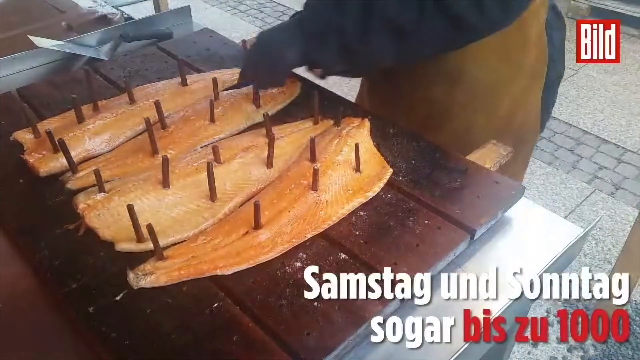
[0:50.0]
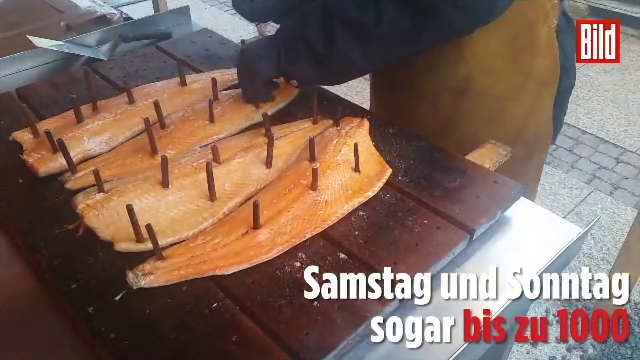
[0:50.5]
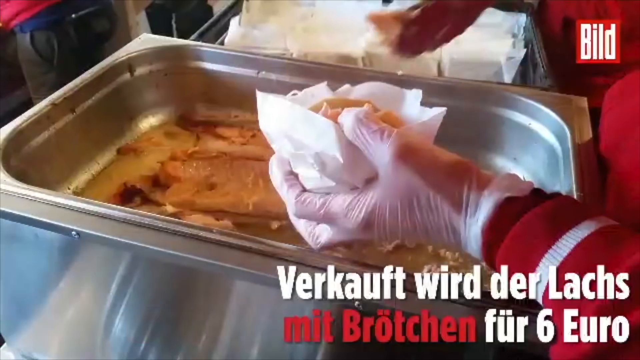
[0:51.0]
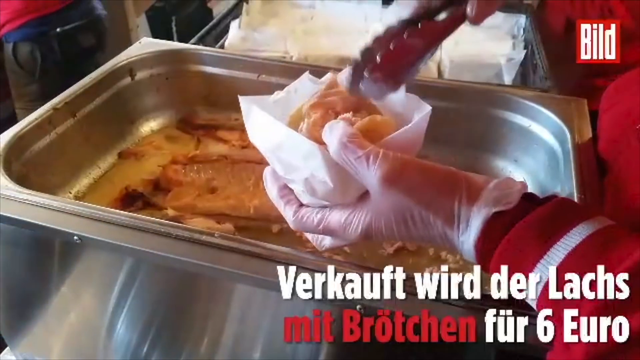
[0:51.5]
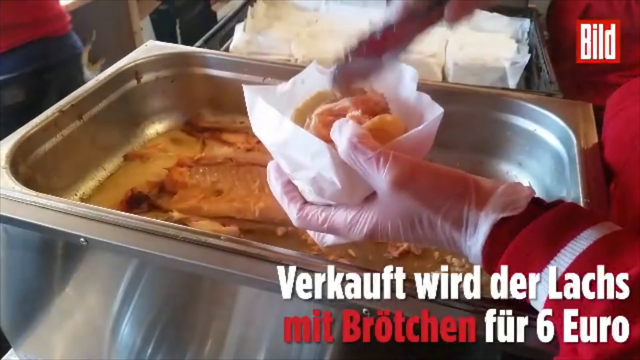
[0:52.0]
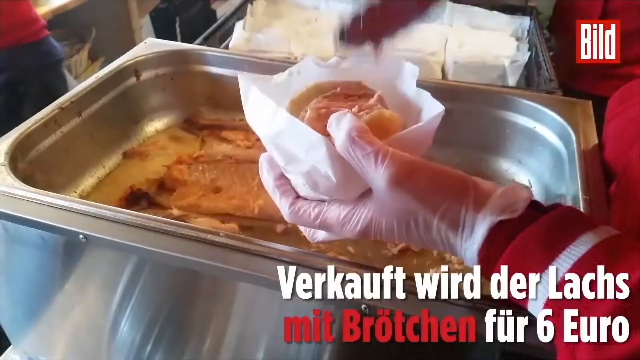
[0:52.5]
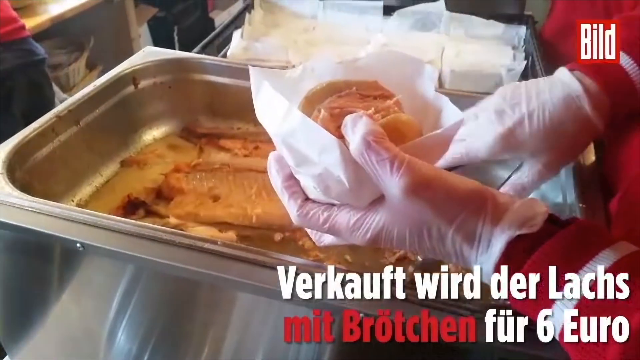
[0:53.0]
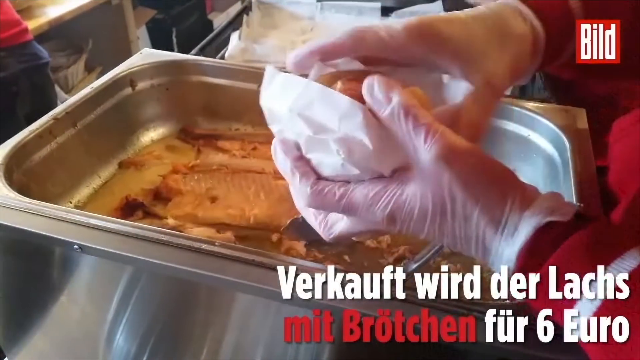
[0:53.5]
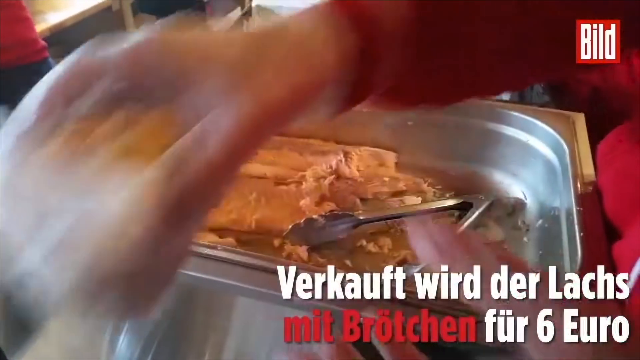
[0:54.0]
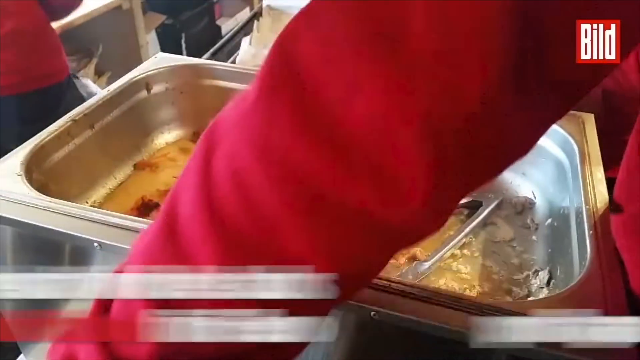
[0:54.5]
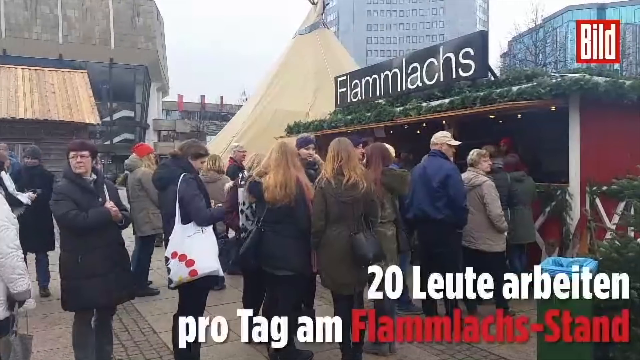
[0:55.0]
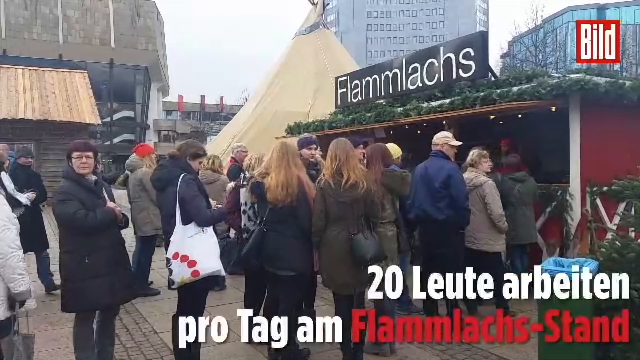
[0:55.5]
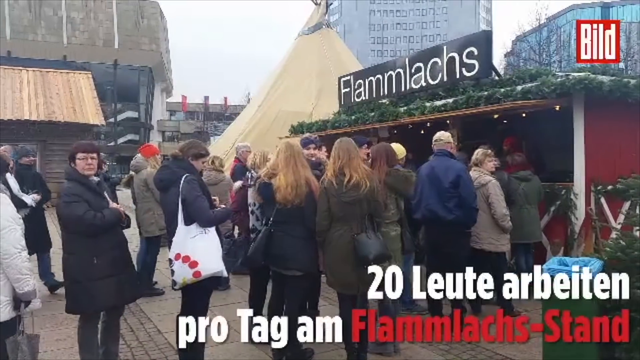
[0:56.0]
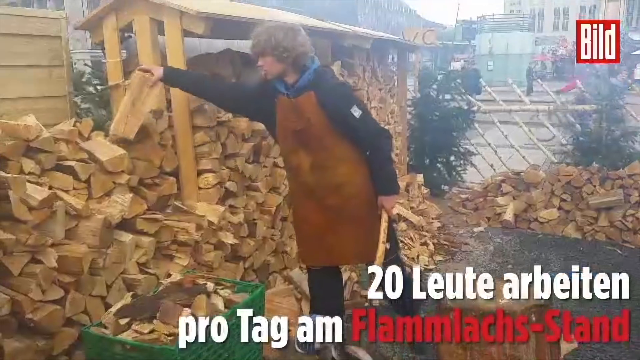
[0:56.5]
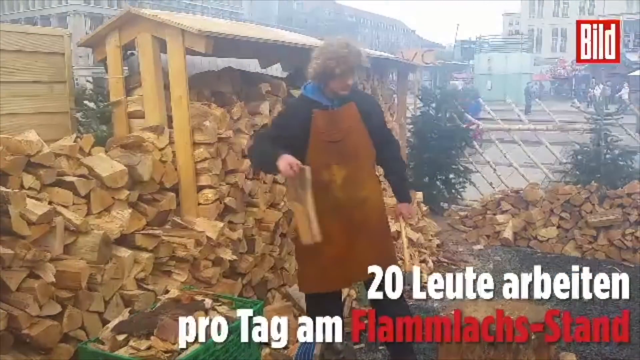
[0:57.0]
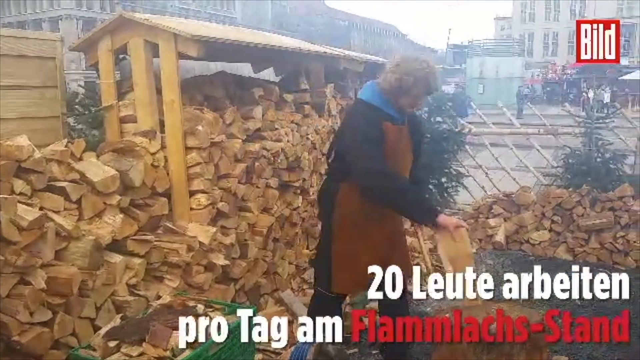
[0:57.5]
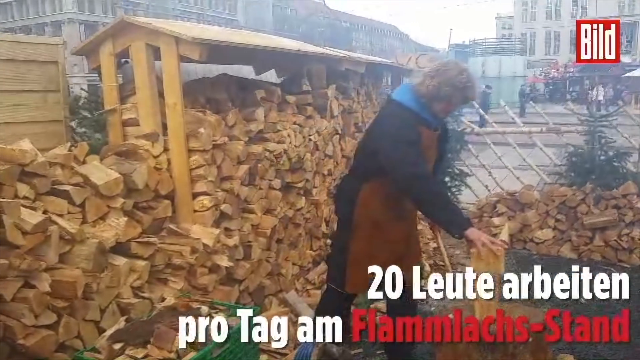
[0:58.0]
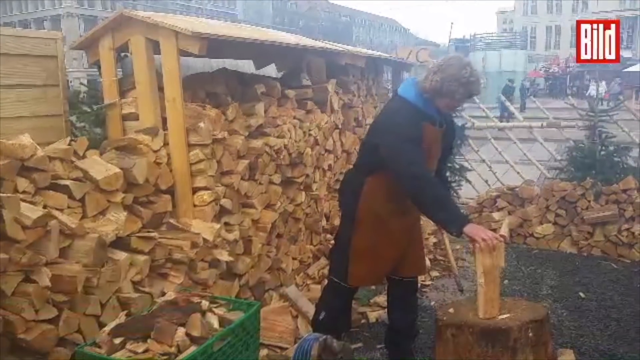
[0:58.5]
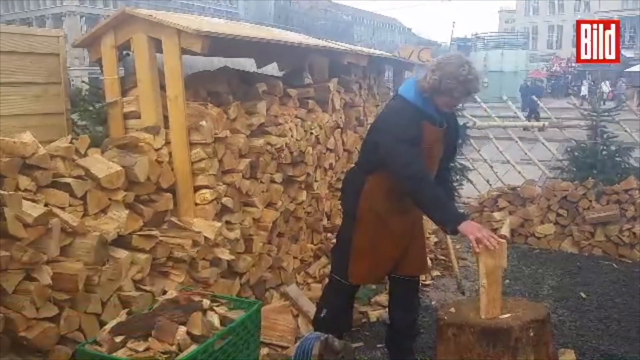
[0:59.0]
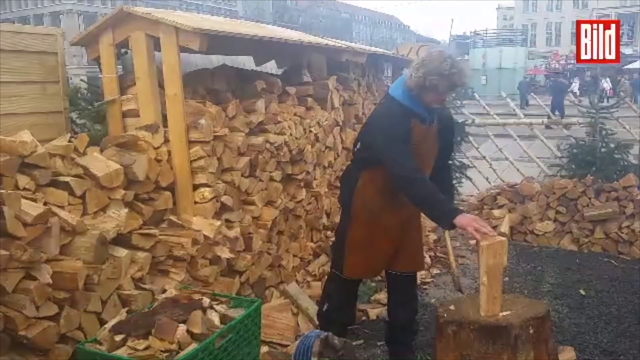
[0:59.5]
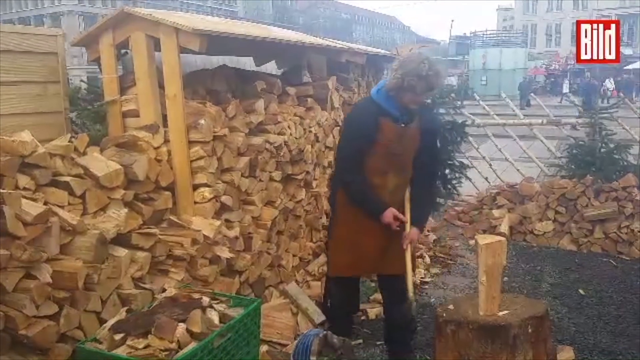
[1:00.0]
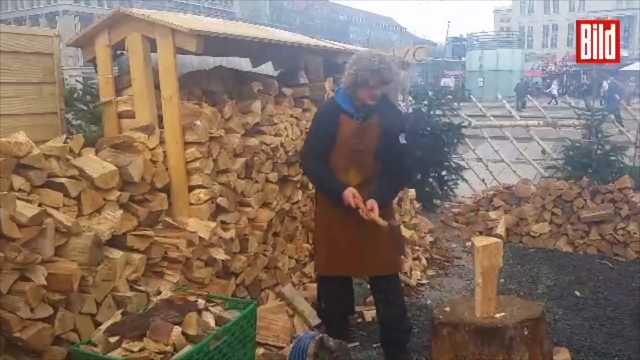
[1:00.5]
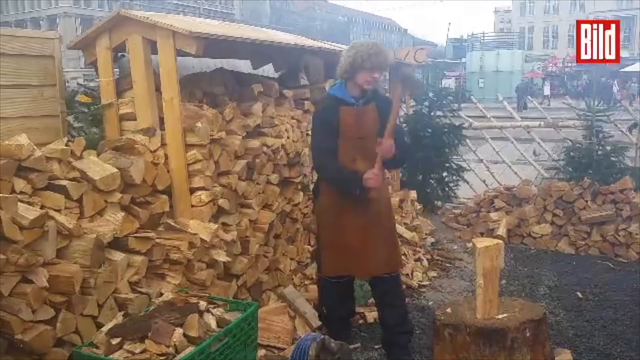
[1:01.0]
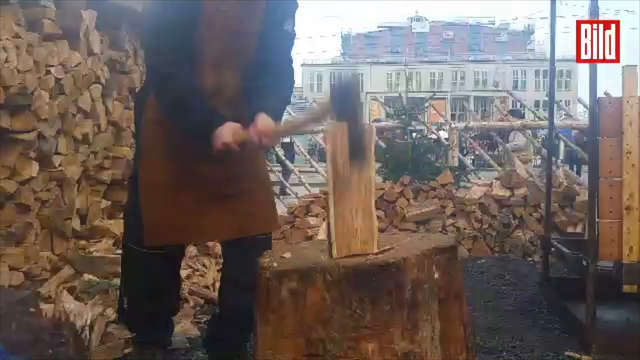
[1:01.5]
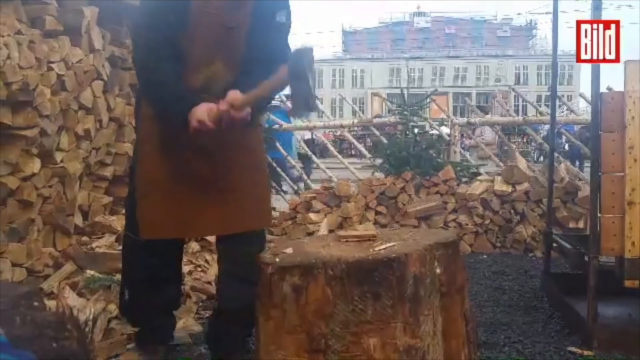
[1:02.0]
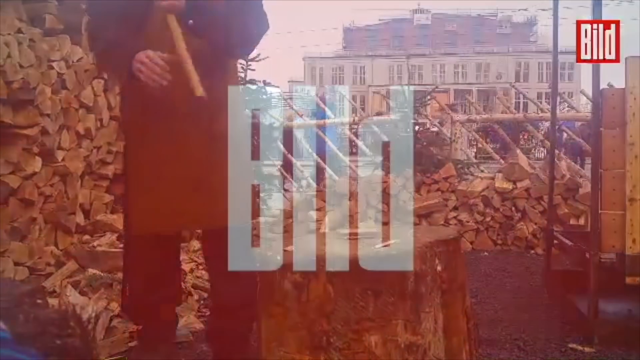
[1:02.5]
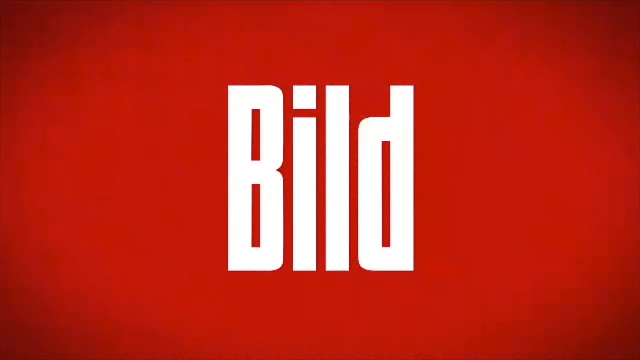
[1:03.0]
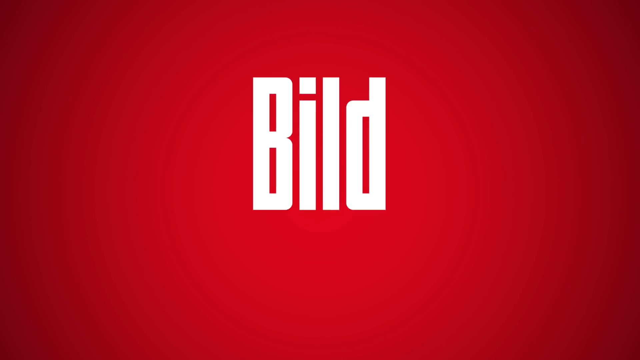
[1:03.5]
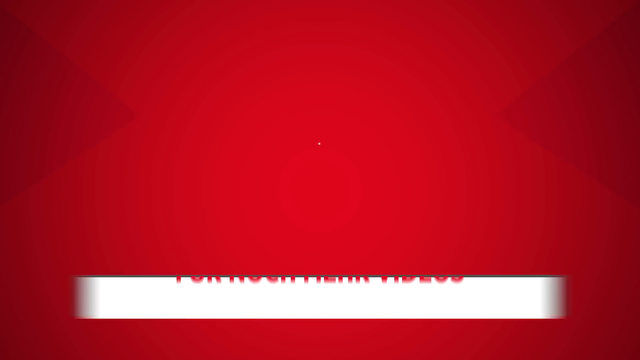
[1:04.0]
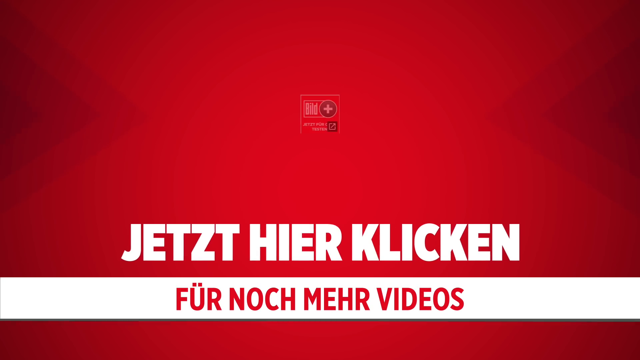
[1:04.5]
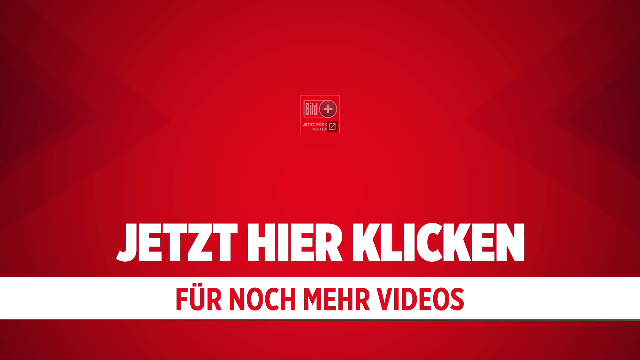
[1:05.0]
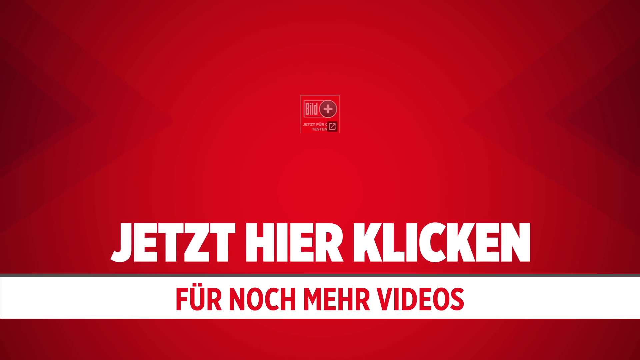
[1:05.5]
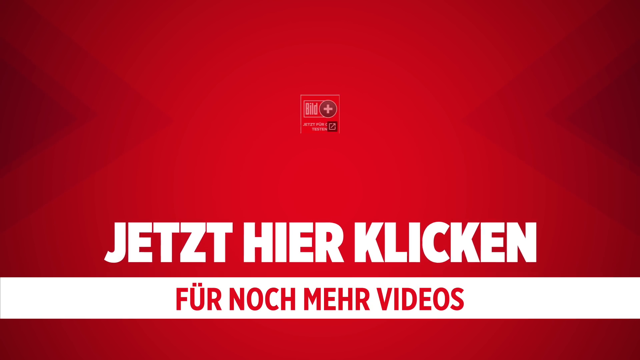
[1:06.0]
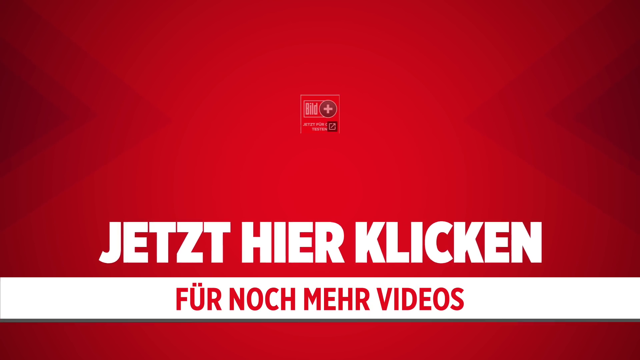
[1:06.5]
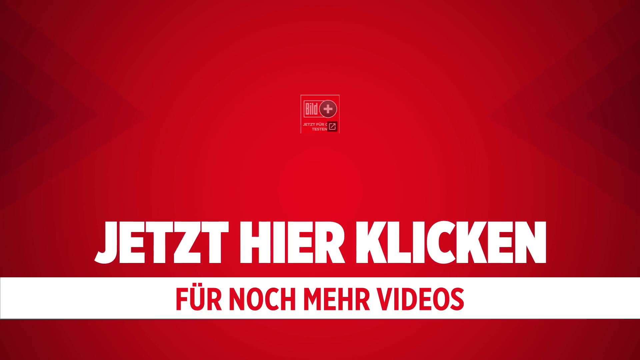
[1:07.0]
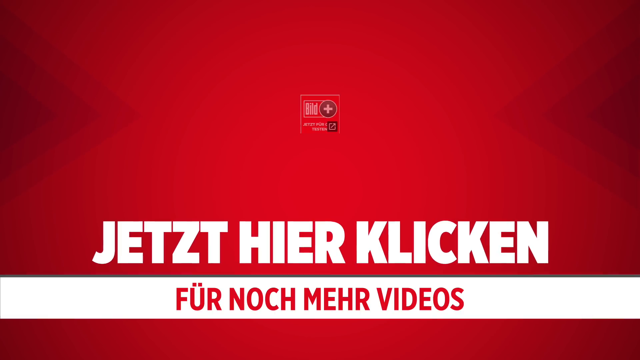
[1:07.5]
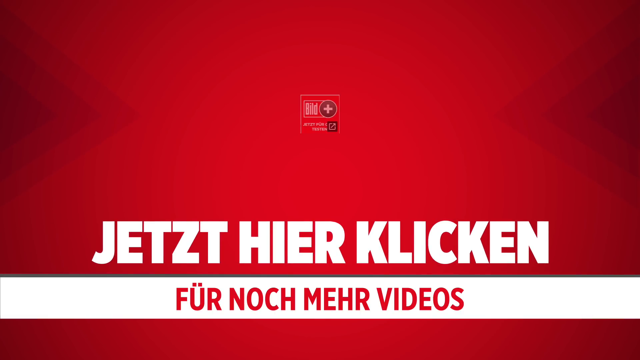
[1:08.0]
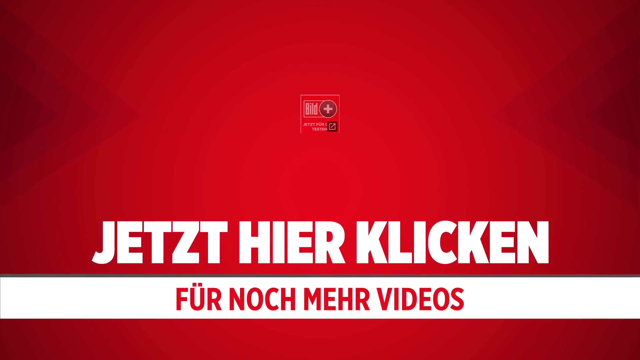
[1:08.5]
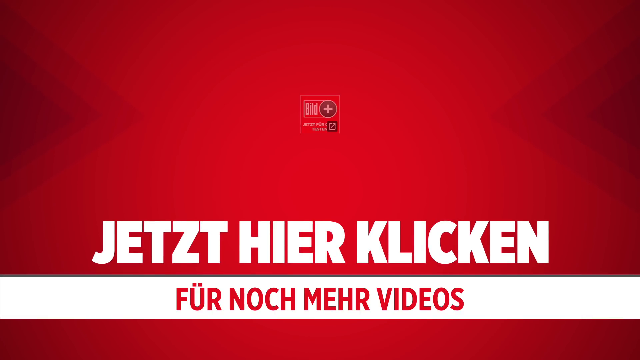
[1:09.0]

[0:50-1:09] Fish is put somewhere. On what looks like a busy street, people are queuing for something. A person is shown cutting firewood. The company behind the video is called beaut, and its logo has a red background with a cross. The man making the fish wears a blue jacket and a brown apron and has short curly hair. He is now wearing gloves as he puts out the fish and serves people, who seem to be queuing outside his restaurant to buy it. He is seen cutting the firewood he uses to cook the fish, and while serving people he wears gloves and puts the fish in a plastic he has made.